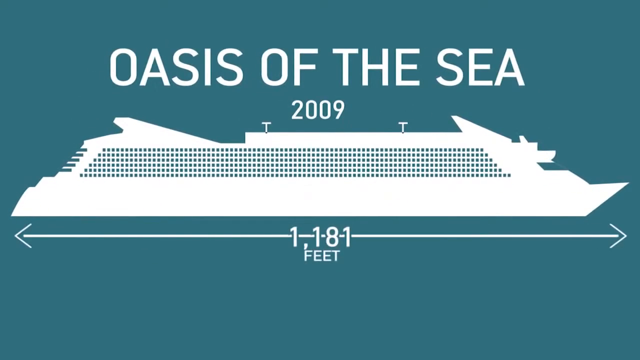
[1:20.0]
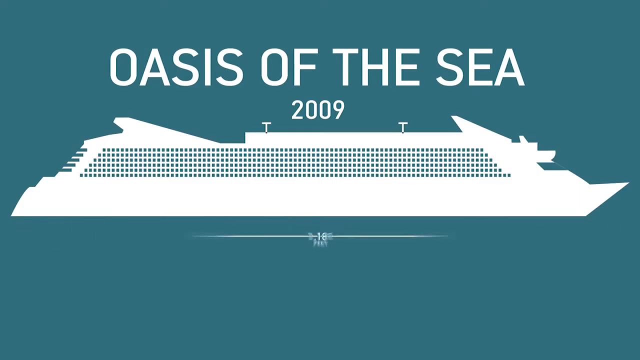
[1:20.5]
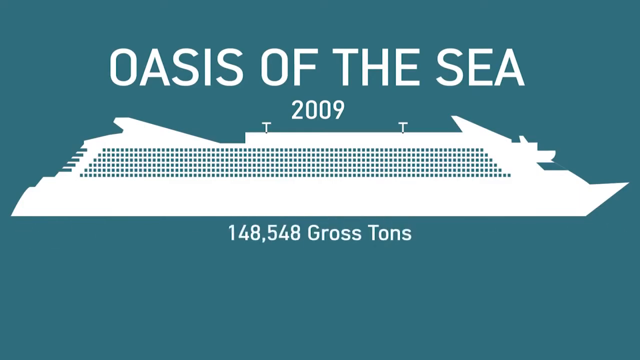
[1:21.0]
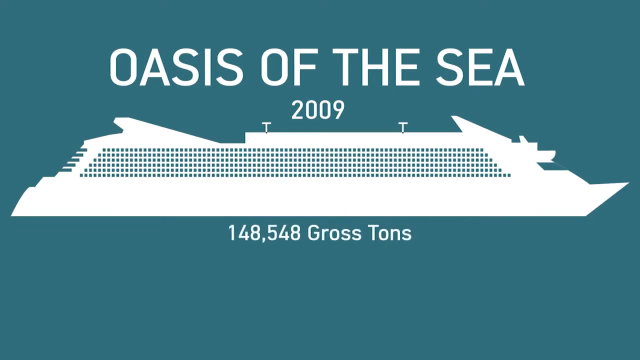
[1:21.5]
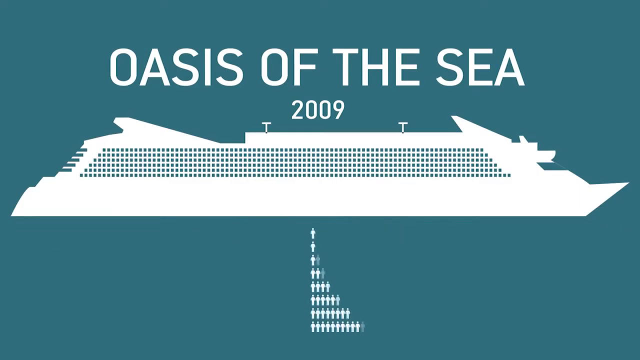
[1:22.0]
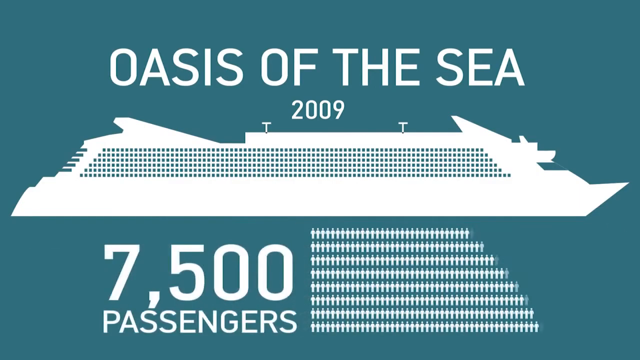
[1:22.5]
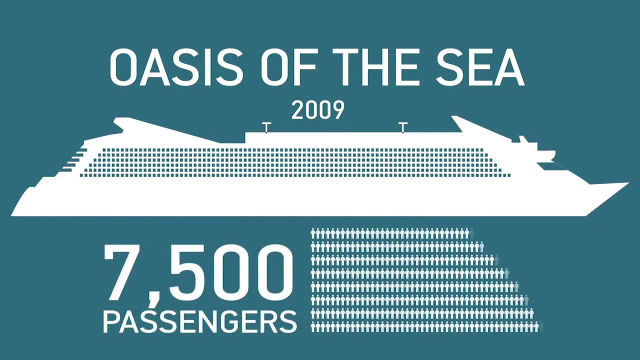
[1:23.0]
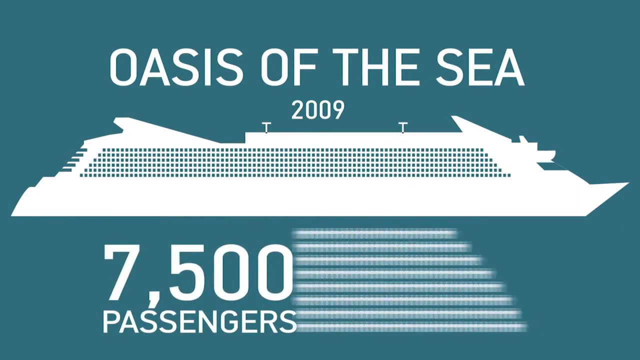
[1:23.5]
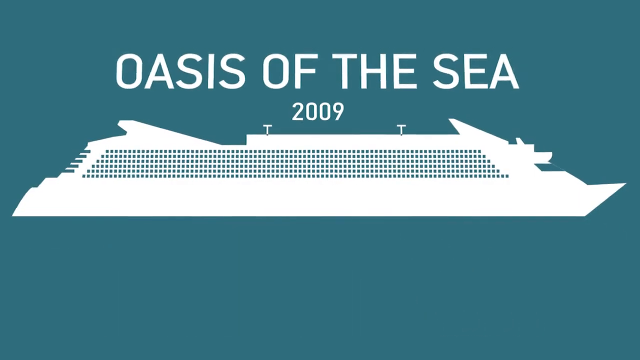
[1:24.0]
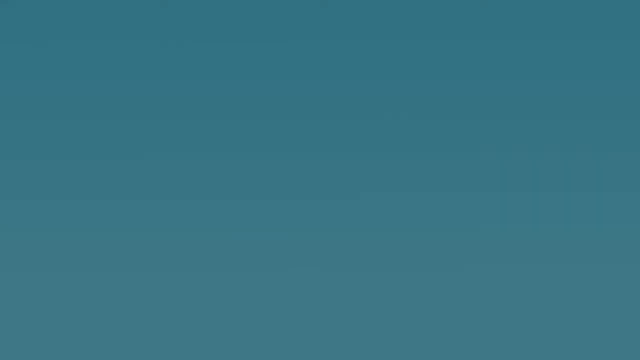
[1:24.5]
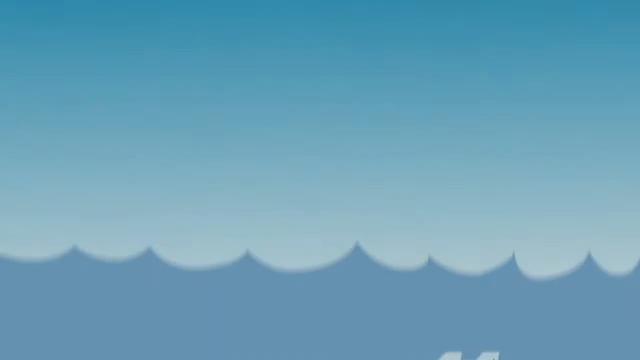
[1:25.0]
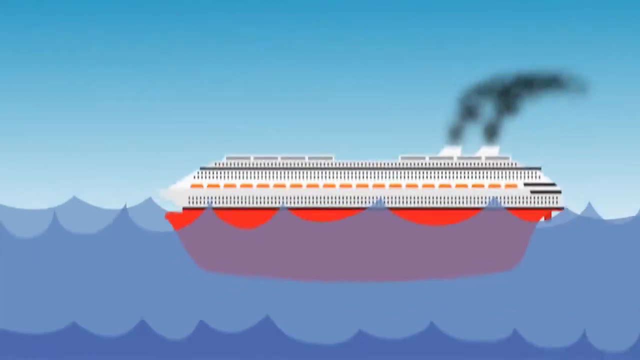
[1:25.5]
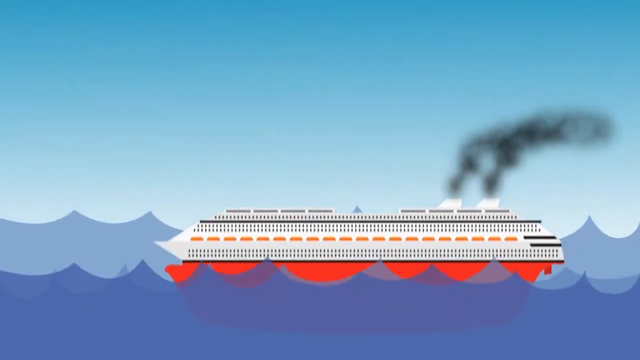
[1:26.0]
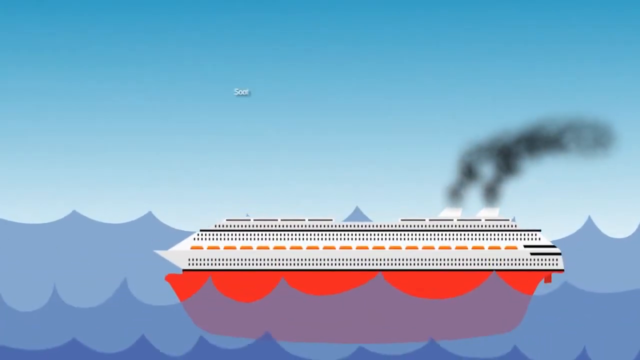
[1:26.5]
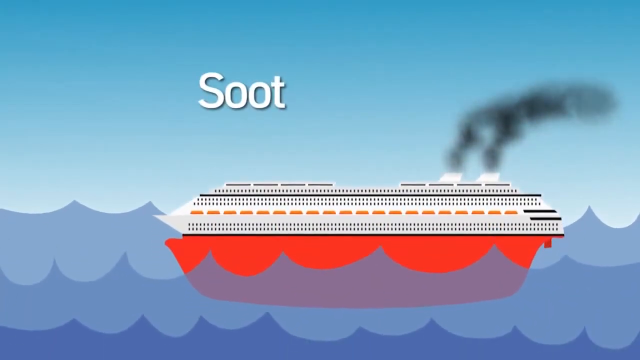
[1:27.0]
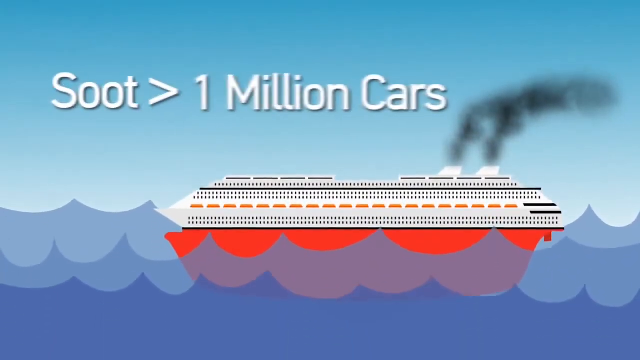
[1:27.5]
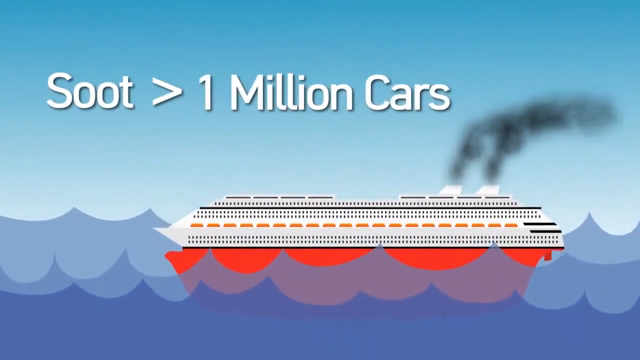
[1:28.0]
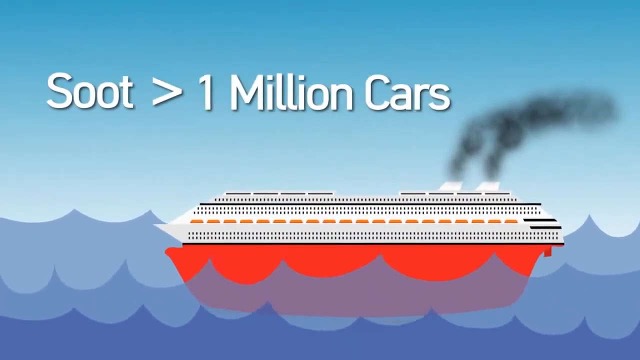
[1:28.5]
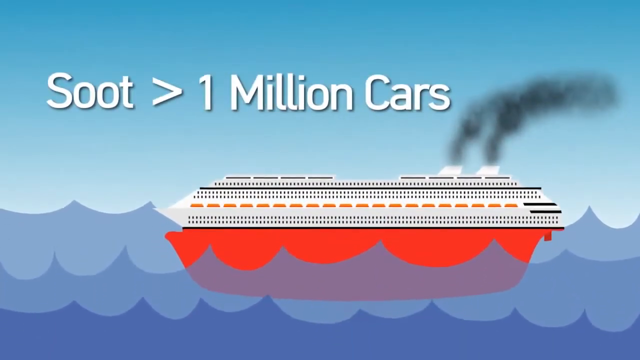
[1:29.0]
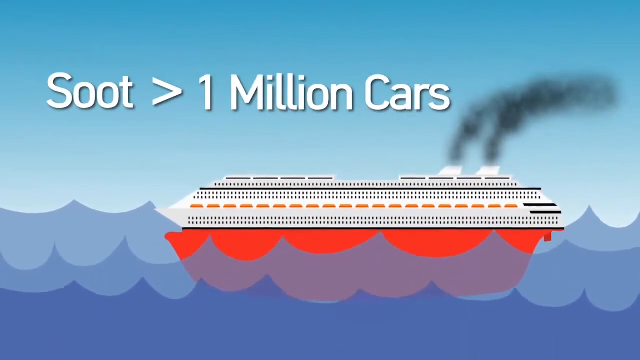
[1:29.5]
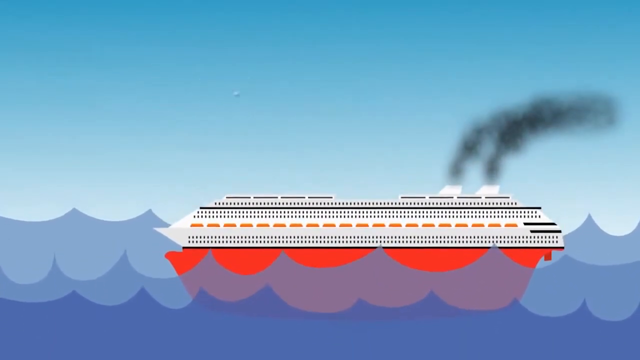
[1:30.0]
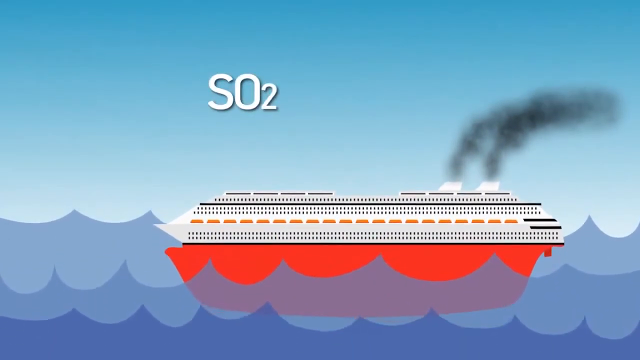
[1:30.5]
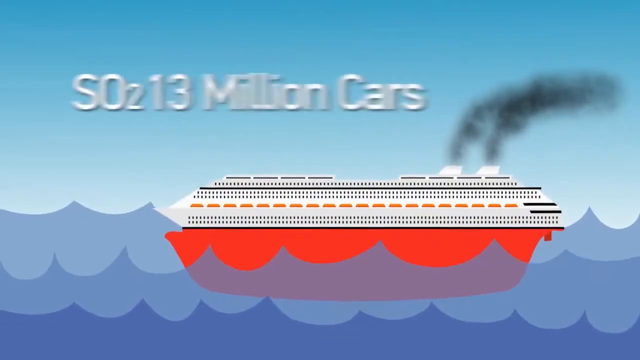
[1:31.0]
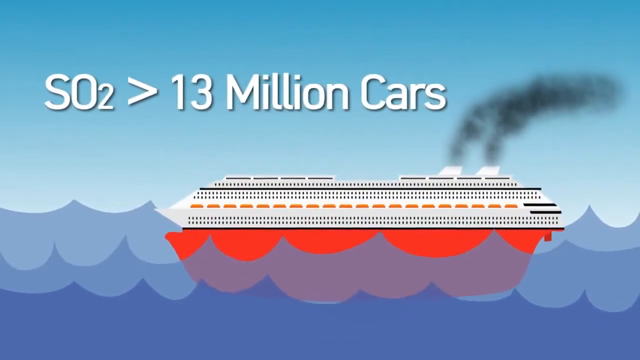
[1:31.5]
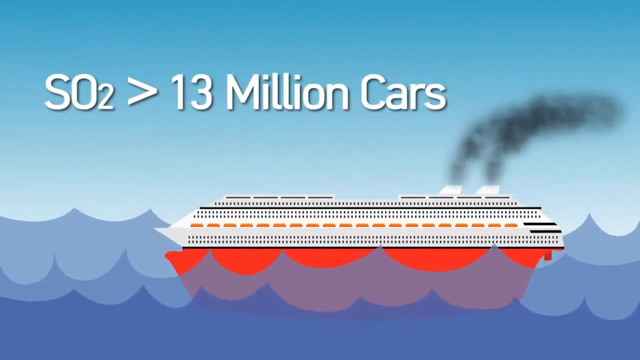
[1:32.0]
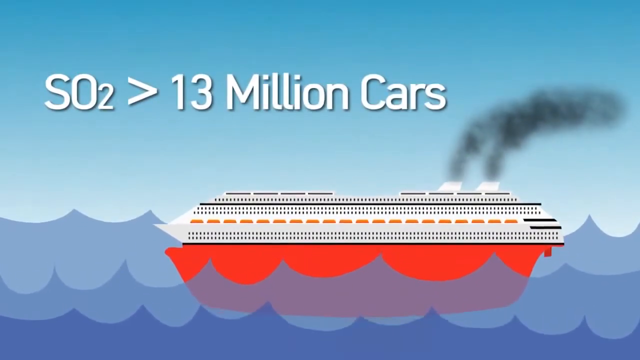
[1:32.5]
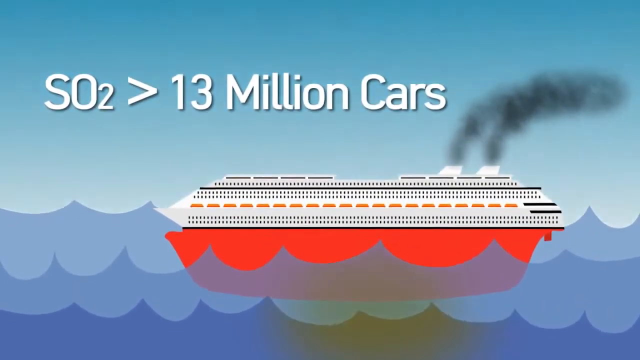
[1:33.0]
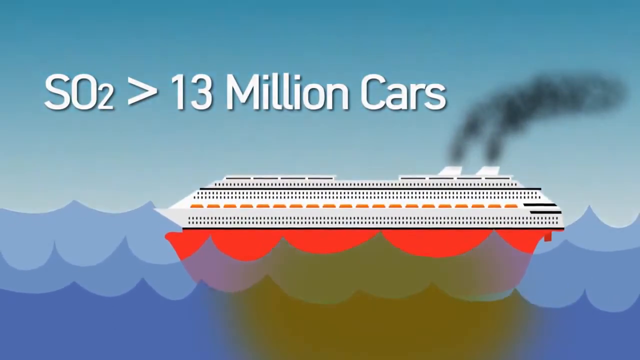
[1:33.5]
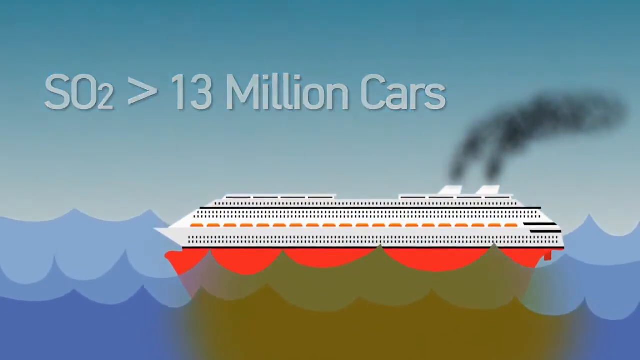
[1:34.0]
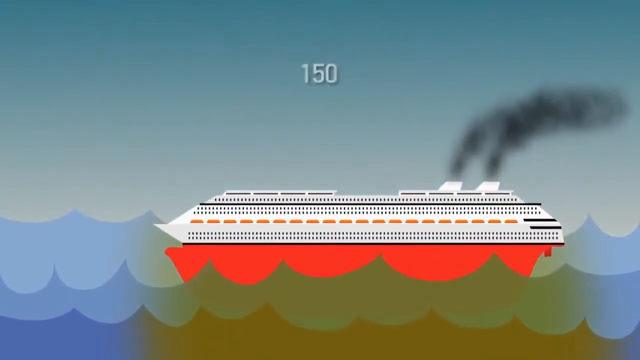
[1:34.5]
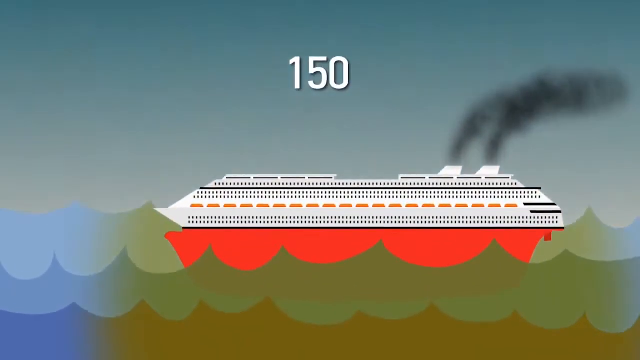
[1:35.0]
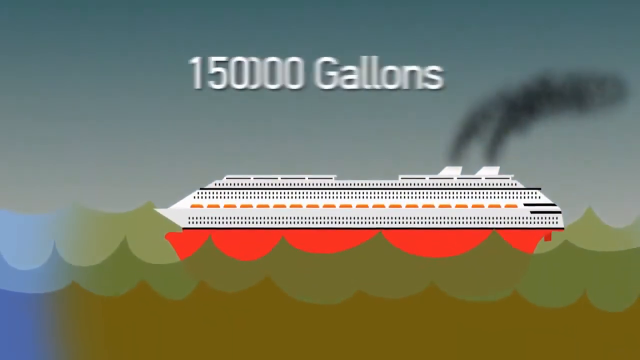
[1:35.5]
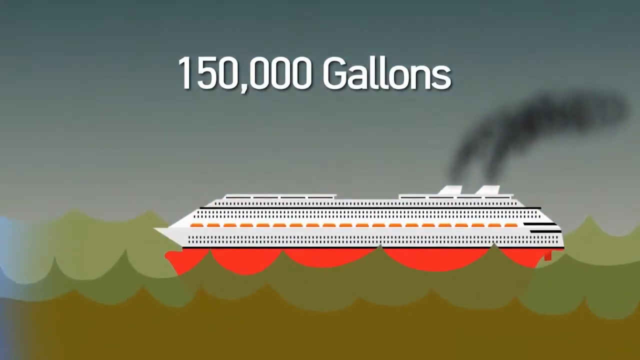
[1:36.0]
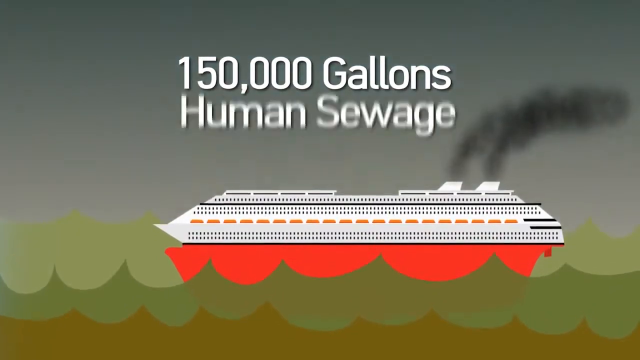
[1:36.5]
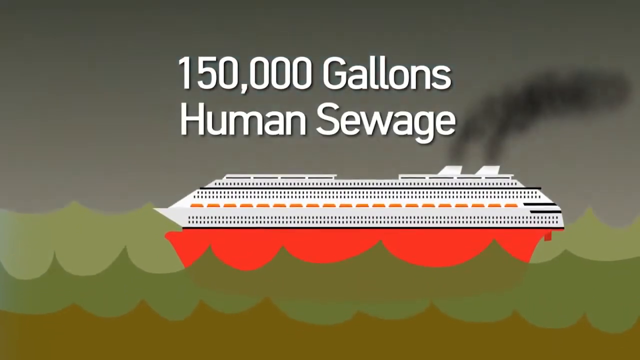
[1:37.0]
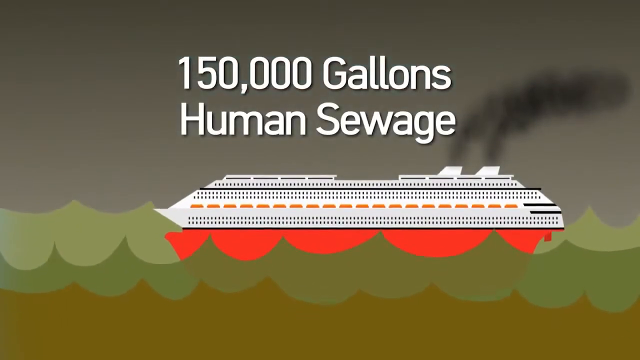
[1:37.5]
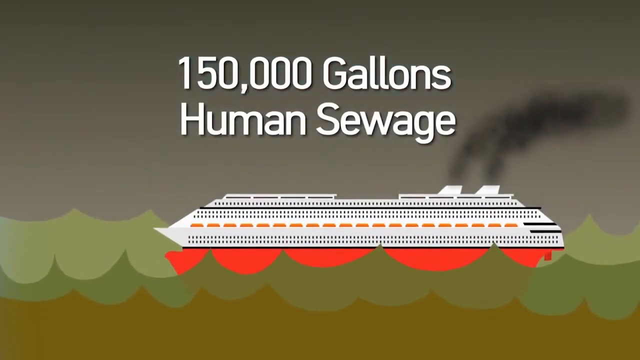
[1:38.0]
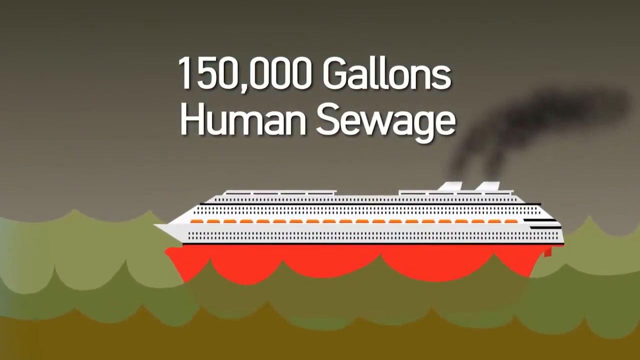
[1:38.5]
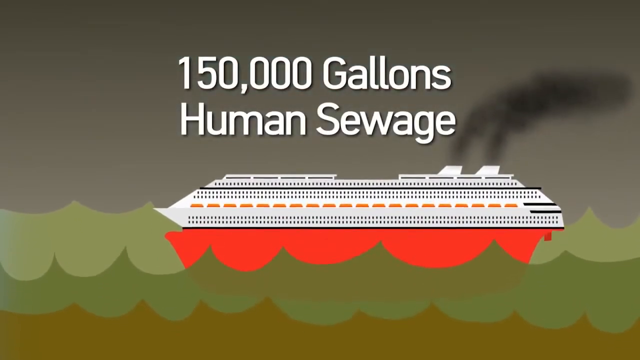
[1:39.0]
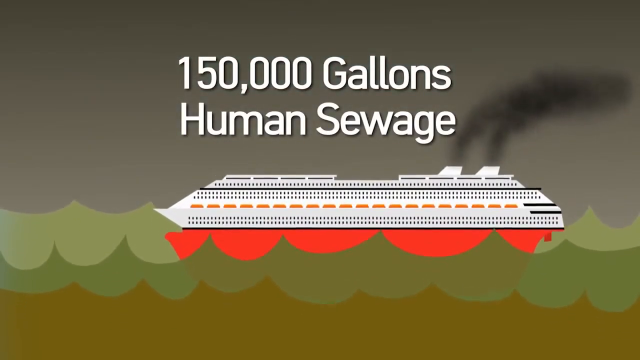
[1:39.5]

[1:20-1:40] The Oasis of the Sea graphic shows "148,548 gross tons" and "7,500 passengers", with even more silhouettes of little bodies to the right. A cartoon graphic follows of a red cruise ship with white on the top part, bobbing up and down on cartoon water with black smoke coming up. Text appears one stat at a time in white sans serif: "soot is more than 1 million cars", "SO2 is greater than 13 million cars", and "150,000 gallons of human sewage". The sky starts out bright blue and gets darker with each stat, turning kind of dark brown and eventually very dark. The previously blue water becomes green. The water is drawn as three rows of line-drawn waves like those children draw.